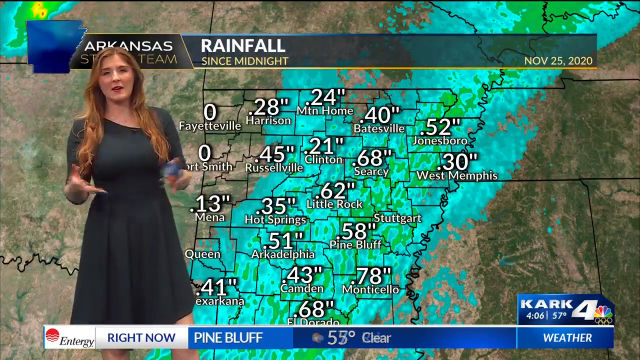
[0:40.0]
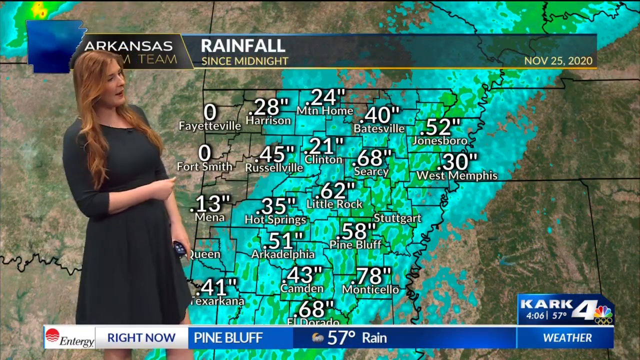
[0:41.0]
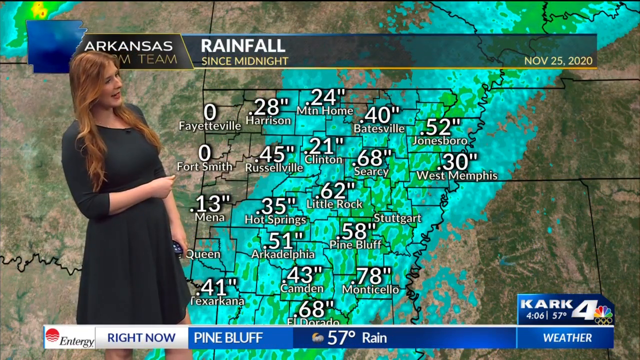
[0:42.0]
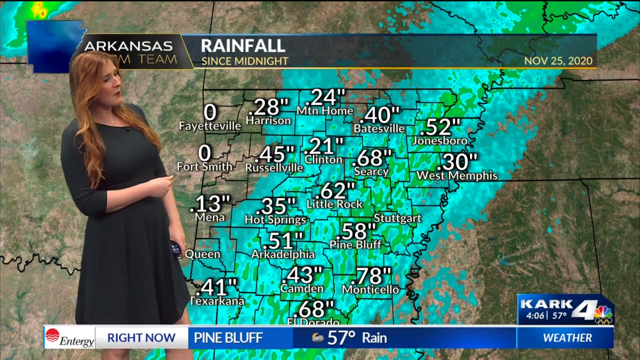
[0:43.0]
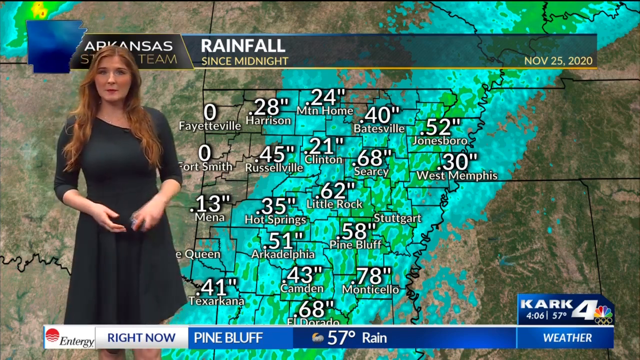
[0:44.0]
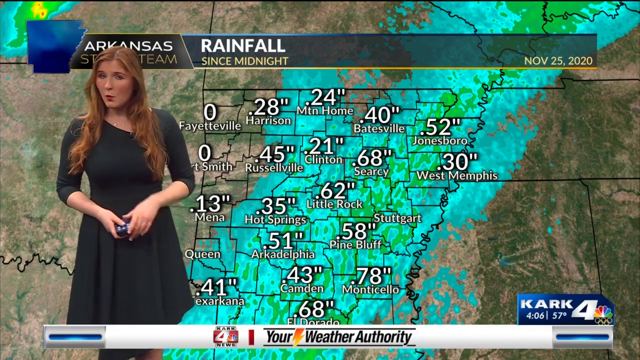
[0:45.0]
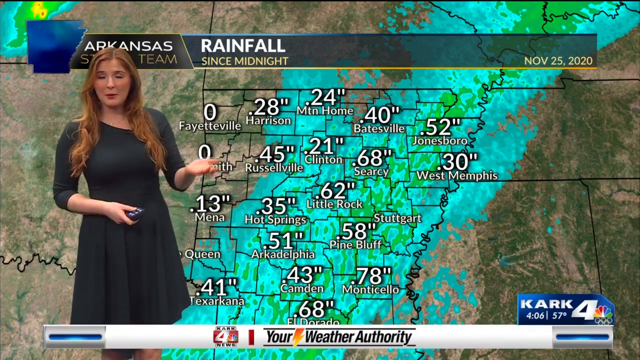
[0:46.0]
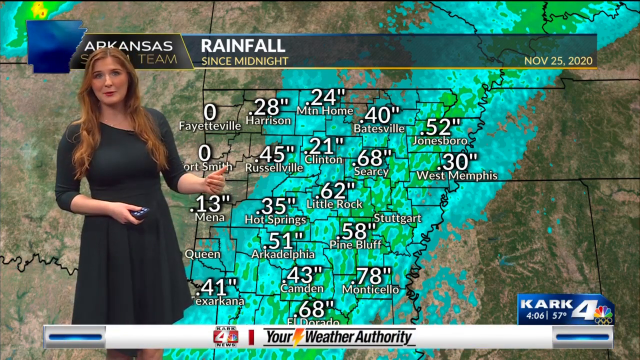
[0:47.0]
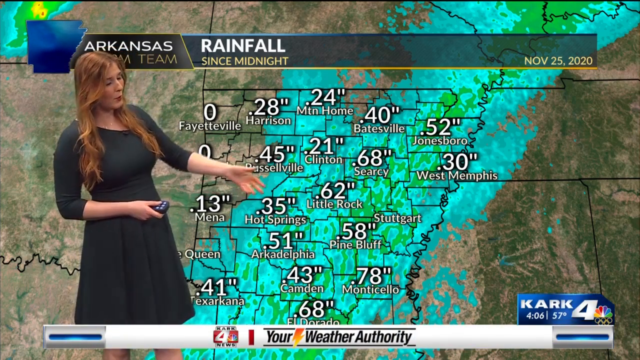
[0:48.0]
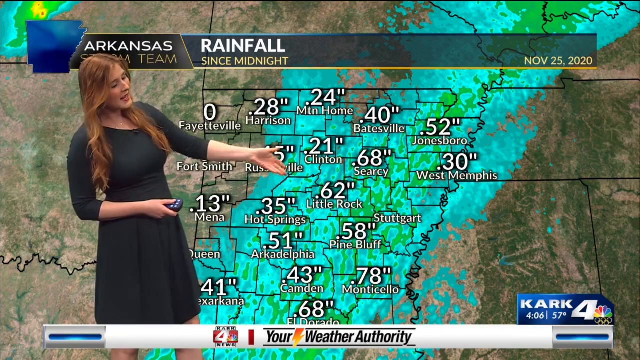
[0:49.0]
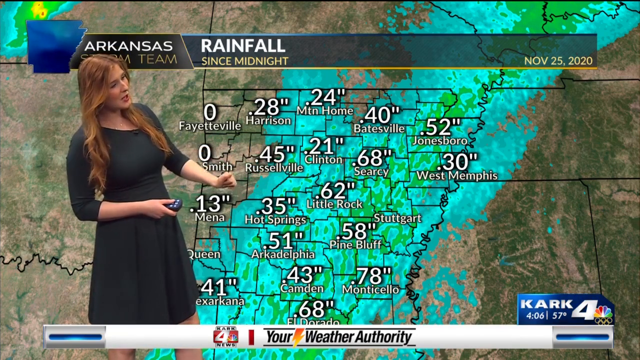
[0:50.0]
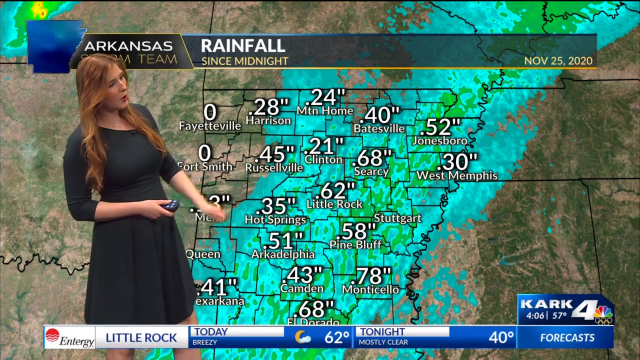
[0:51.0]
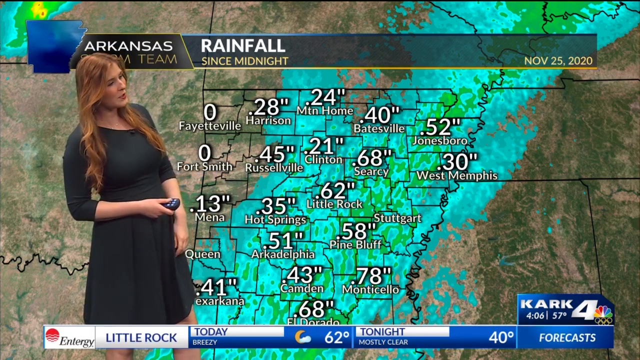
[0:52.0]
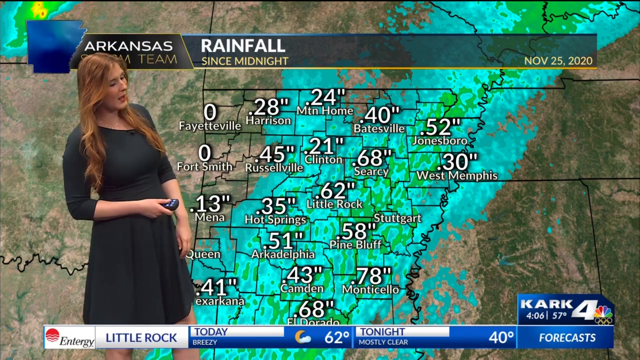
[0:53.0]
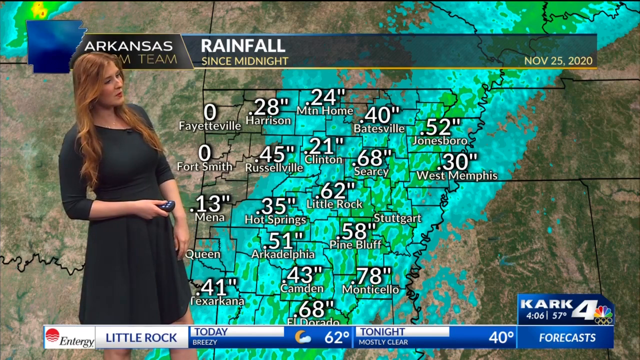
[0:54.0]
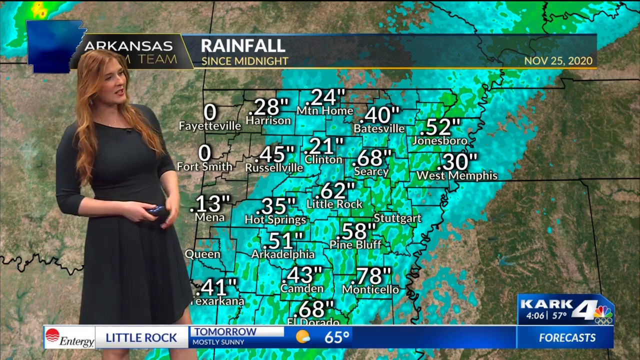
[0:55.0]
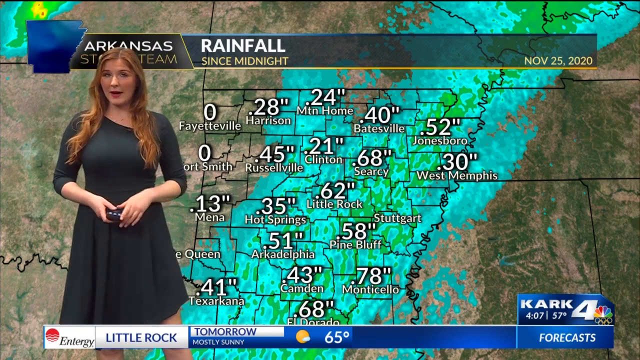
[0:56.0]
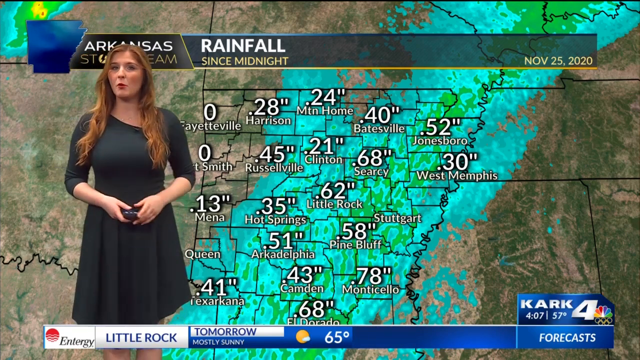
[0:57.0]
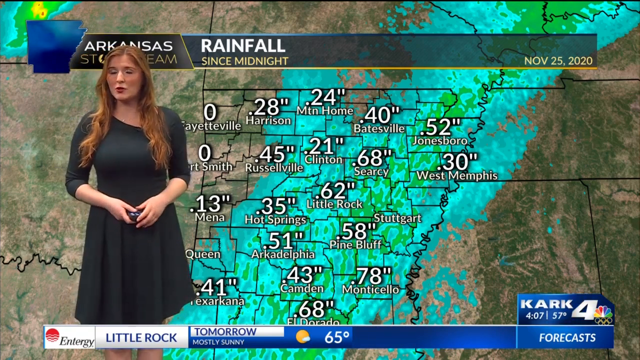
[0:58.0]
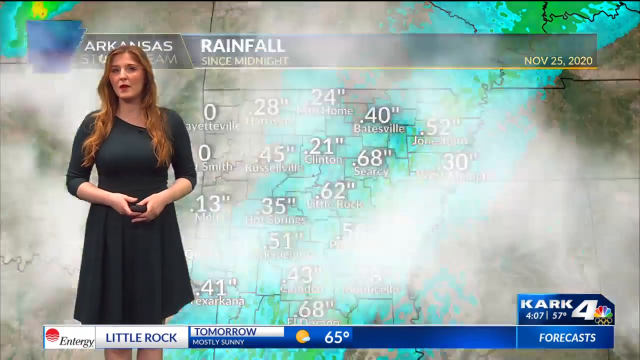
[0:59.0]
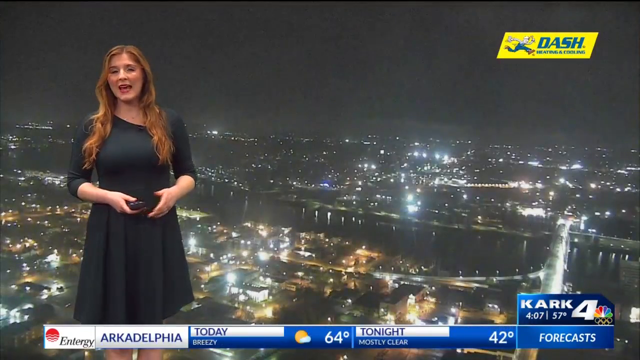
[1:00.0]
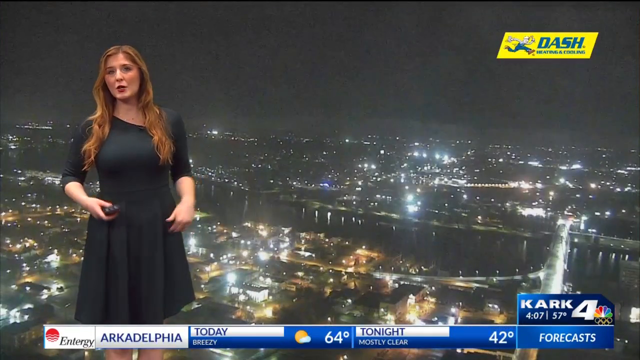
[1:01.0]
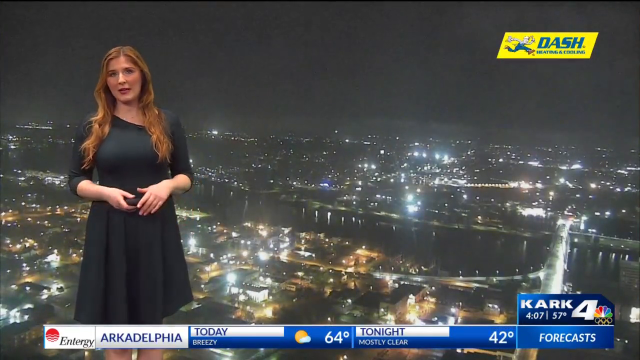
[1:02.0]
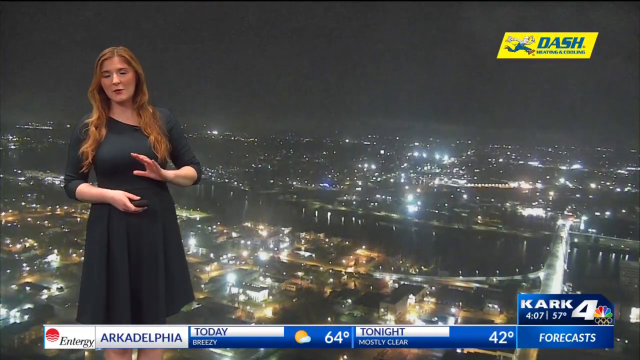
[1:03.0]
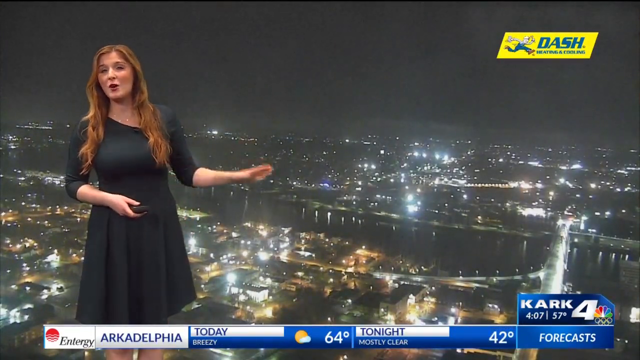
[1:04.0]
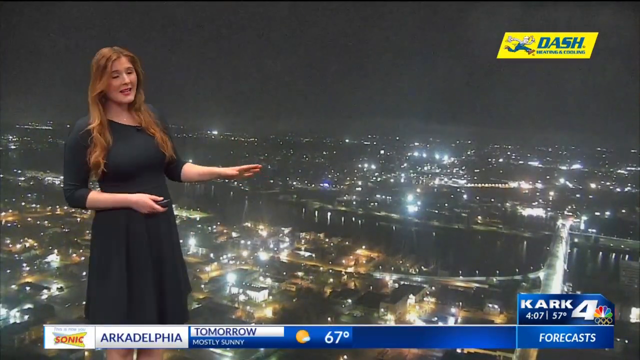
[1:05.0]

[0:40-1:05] A rainfall map appears with the text "rainfall" in bold white and "since midnight" in light yellow, dated November 25, 2020. It lists rainfall amounts for many places: Fayetteville 0, Harrison 28, Mountain Home 24, Batesville 0.40, Jonesboro 0.52, West Memphis 0.30, Searcy 0.68, Clinton 0.21, Russellville 0.45, Manor 0.13, Hot Springs 0.35, Little Rock 0.62, Pine Bluff 0.58, Monticello 0.78 and Candom 0.43. Next comes a night view of a city lit up with many lights under the sky. A graphic for Arcadelfia shows that today it is breezy and 64 degrees, with the text "tonight mostly clear, 42 degrees" forecast. In the right-hand corner of the screen is an advert for Dash, written in blue on a yellow background, featuring a running man.